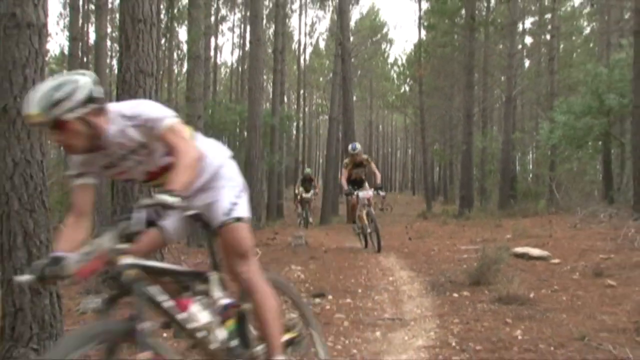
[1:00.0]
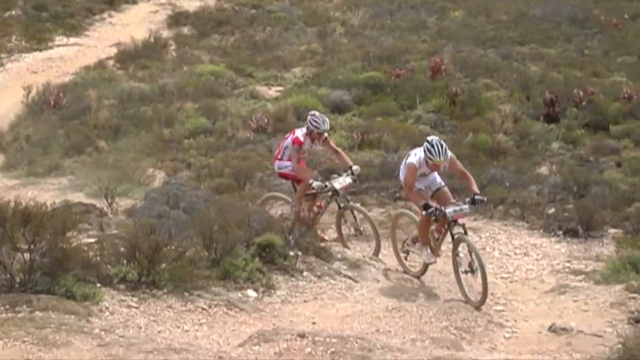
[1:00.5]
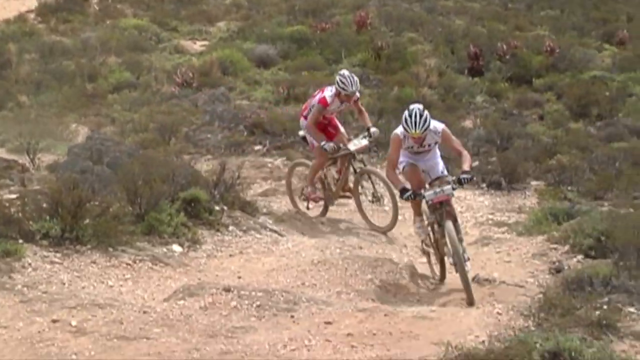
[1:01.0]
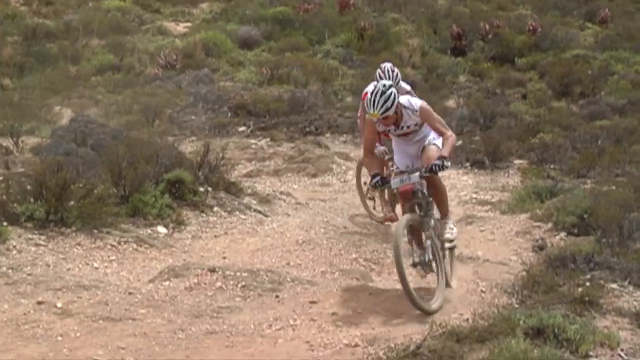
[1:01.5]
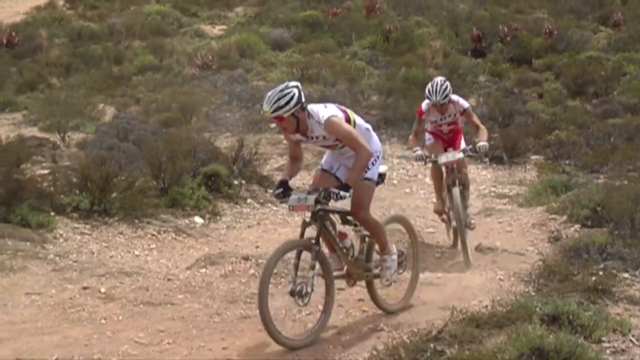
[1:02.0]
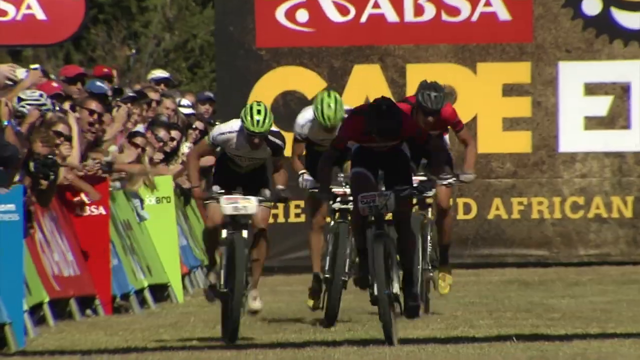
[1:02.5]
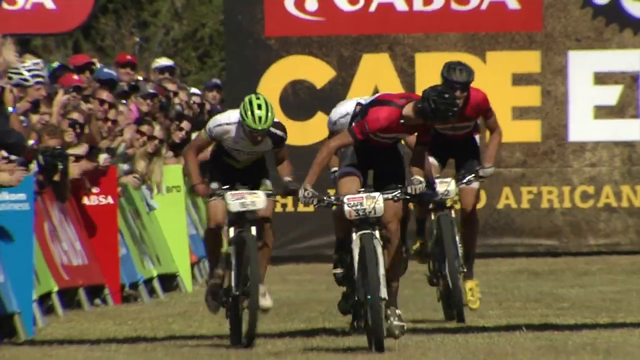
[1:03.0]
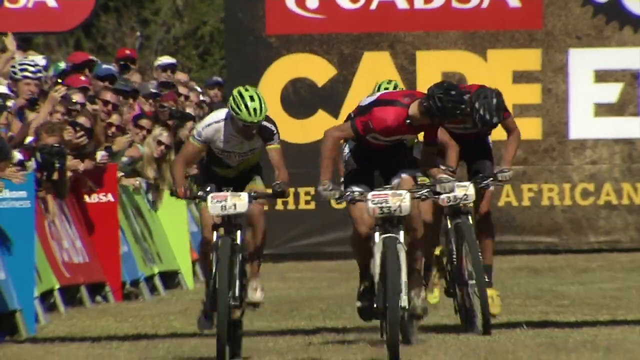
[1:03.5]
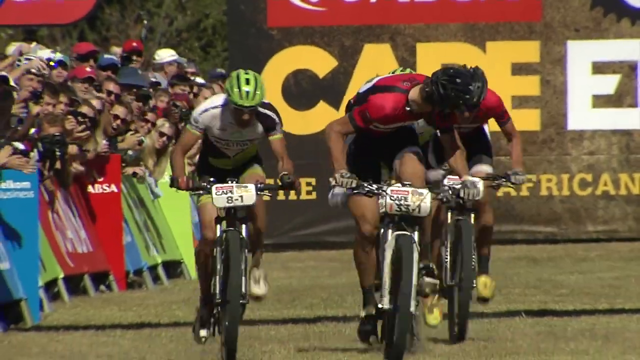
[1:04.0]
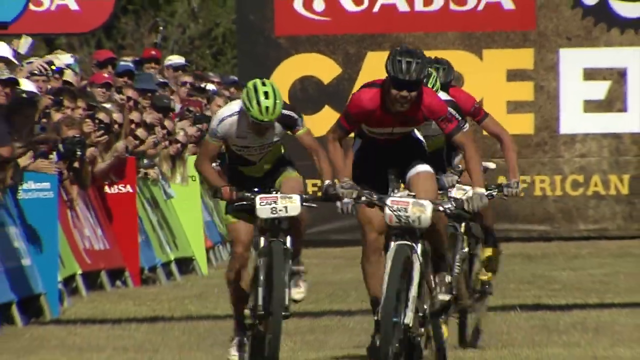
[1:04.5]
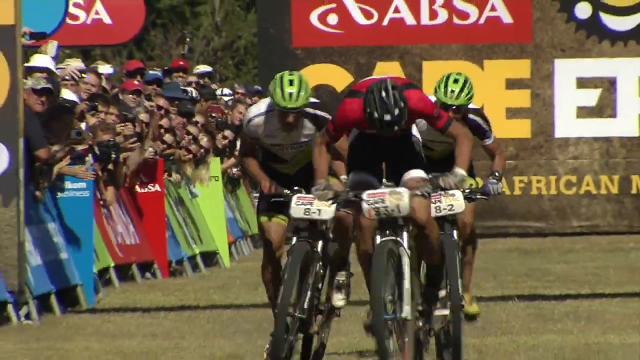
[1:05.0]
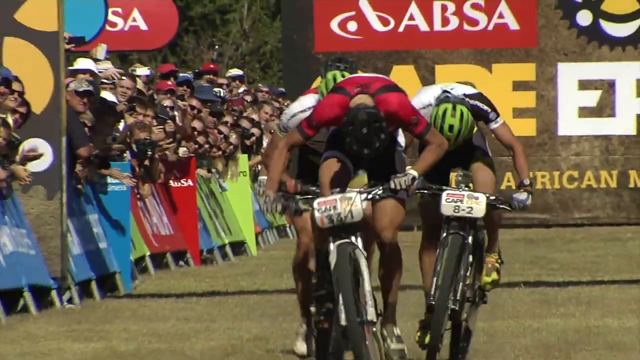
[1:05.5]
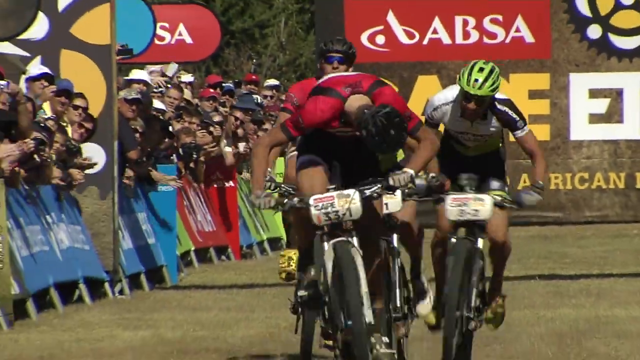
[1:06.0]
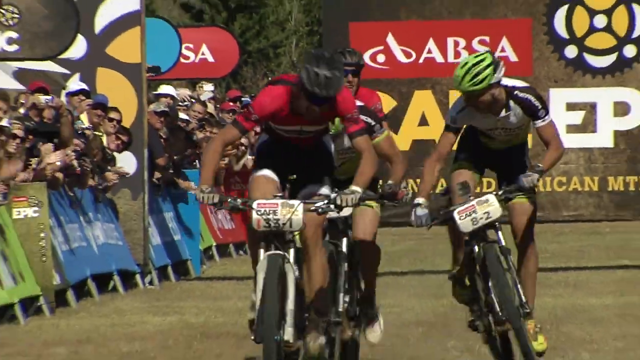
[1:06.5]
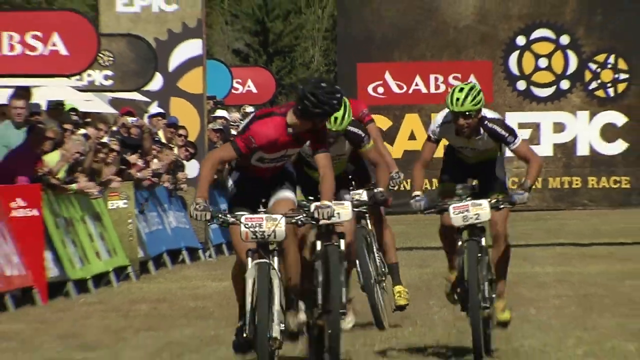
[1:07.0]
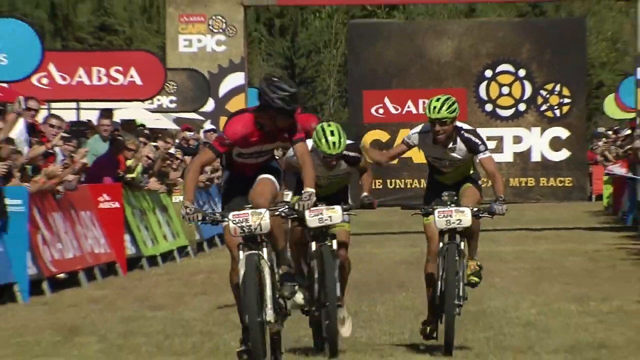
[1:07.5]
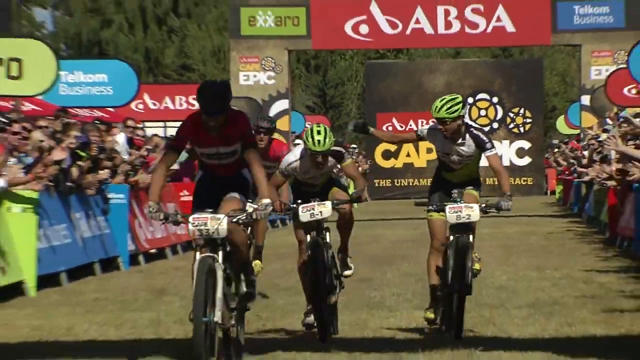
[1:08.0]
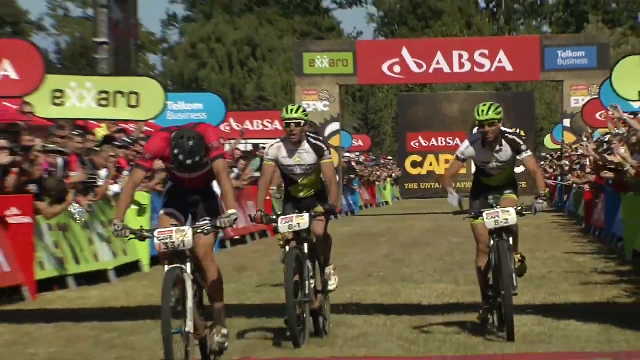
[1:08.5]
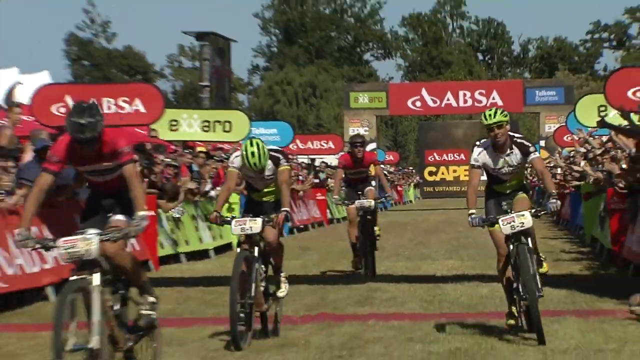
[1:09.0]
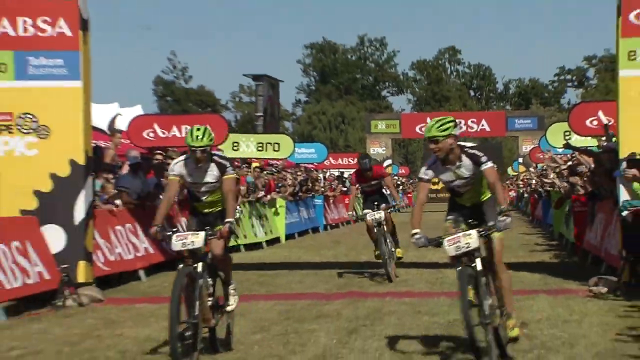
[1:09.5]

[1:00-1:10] A small dirt trail runs among many tall trees with green leaves. Three riders are in the frame: the one on the left side of the screen, closest to the camera, wears white shorts, a white top and a white helmet, with two other cyclists behind him. A fairly large rock is in the bottom right corner of the screen. The scene changes to another dirt trail, dirty and rocky, with cyclists pumping their bikes up the hill and a lot of tumbleweed-looking brush all around the trail. The scene changes again to three cyclists riding toward the camera. The lead cyclist wears a red top with black trim and a black helmet, and looks back at another cyclist behind him. A crowd of people watches from the other side of a barrier with different colors and emblems on it. The three cyclists pump their bikes hard, apparently trying to reach the finish line.